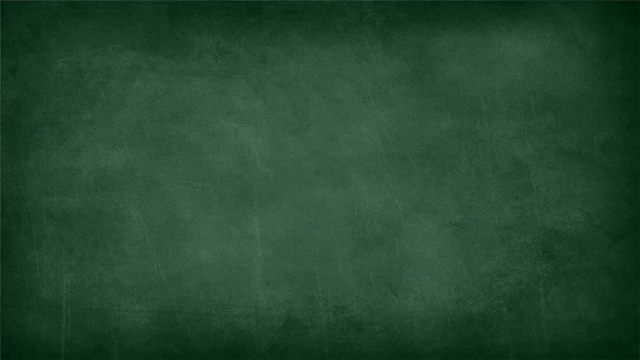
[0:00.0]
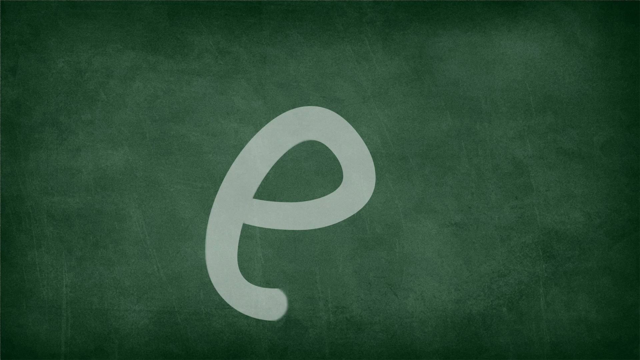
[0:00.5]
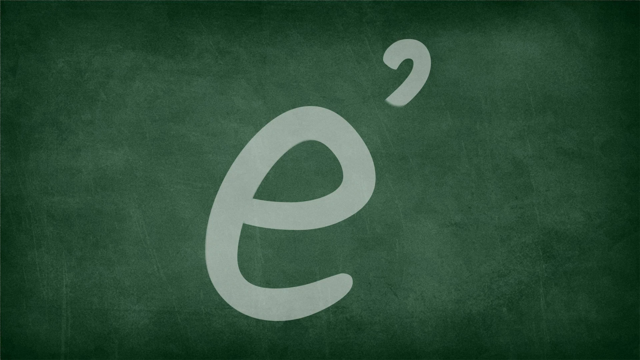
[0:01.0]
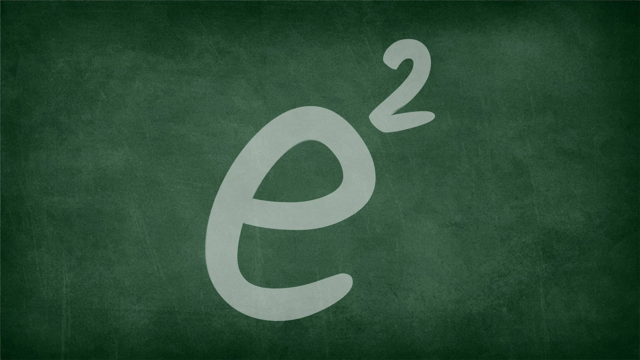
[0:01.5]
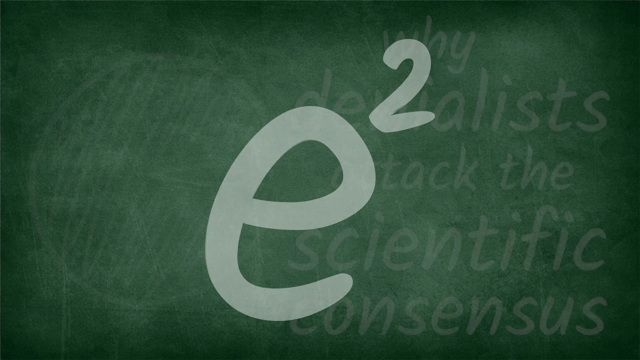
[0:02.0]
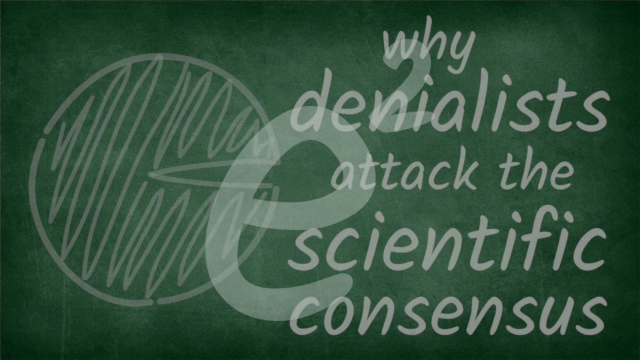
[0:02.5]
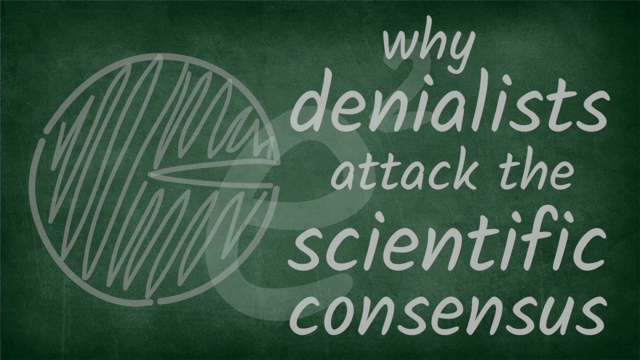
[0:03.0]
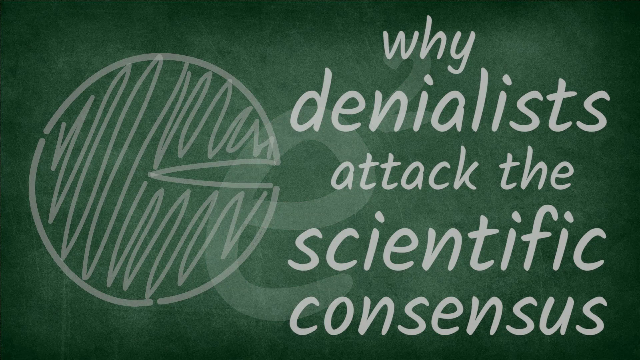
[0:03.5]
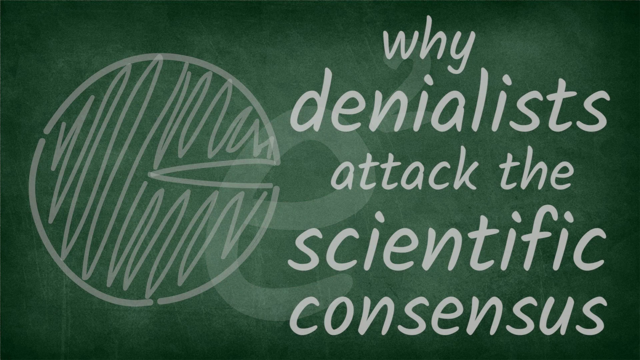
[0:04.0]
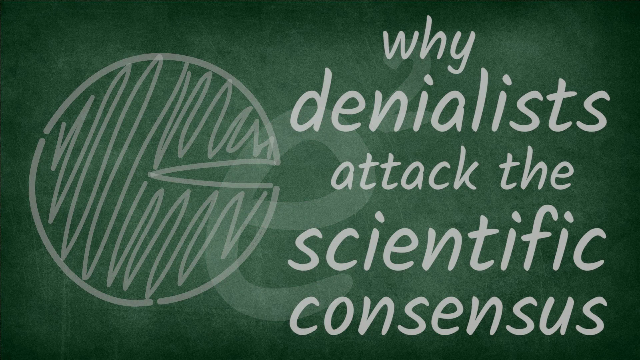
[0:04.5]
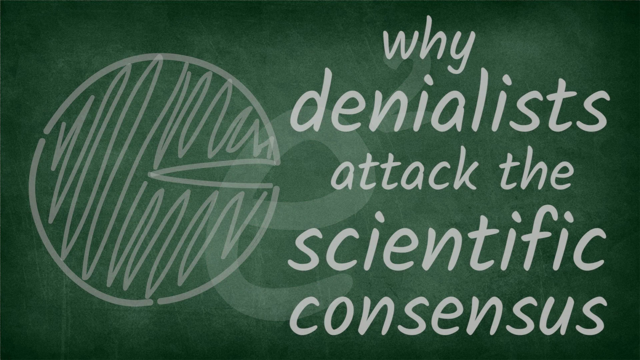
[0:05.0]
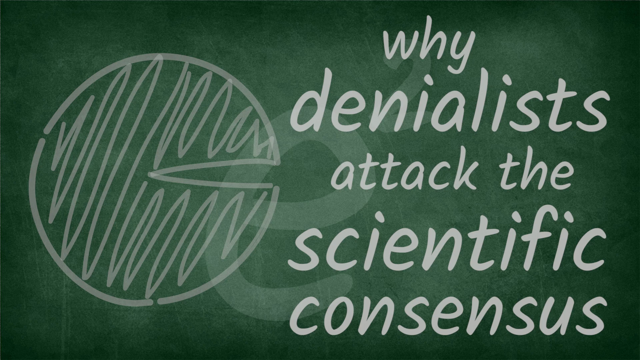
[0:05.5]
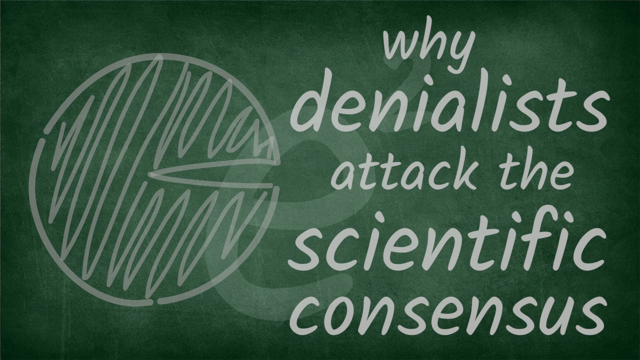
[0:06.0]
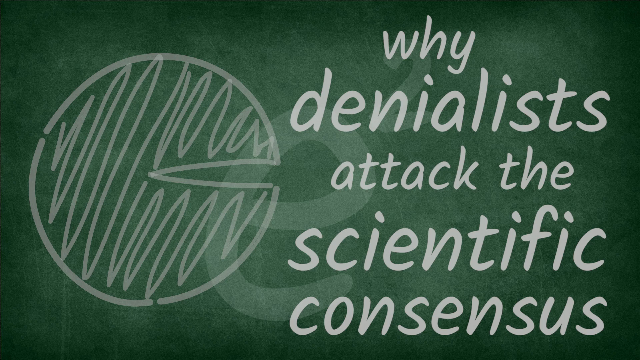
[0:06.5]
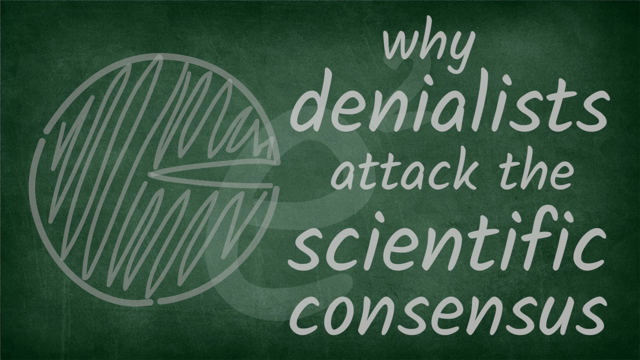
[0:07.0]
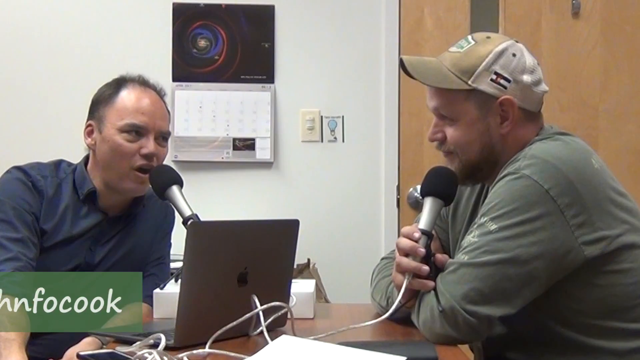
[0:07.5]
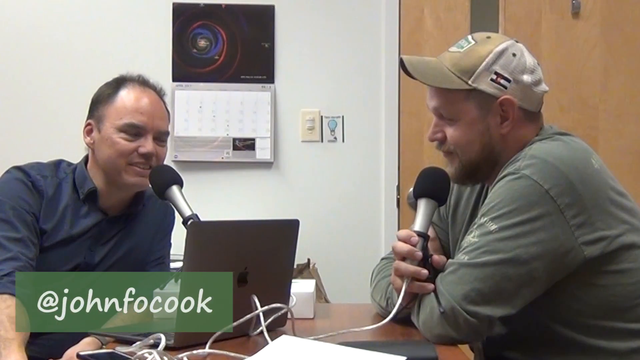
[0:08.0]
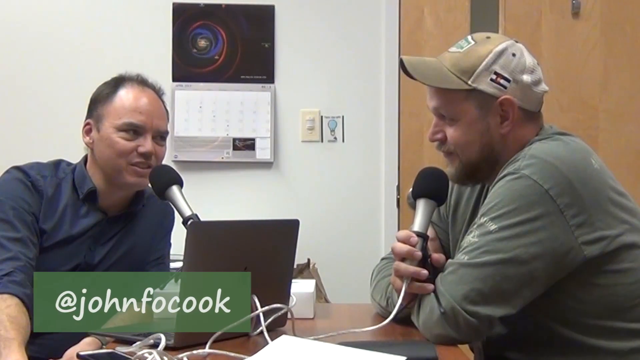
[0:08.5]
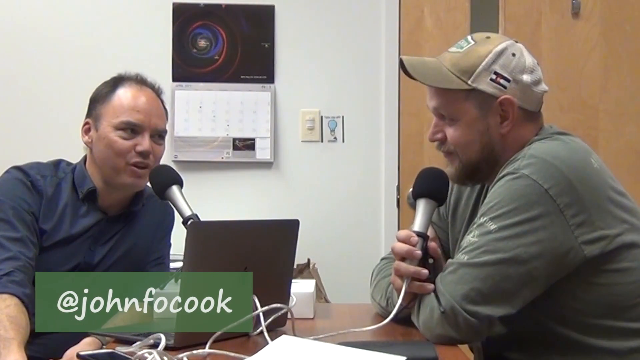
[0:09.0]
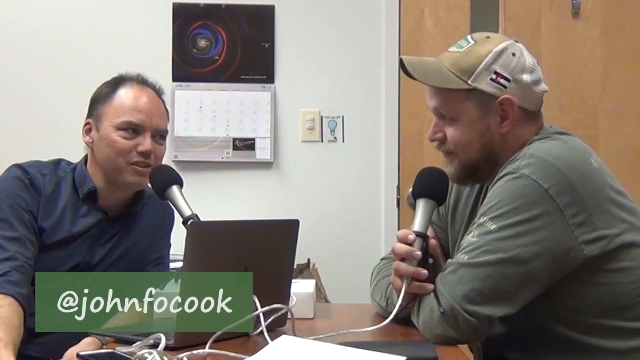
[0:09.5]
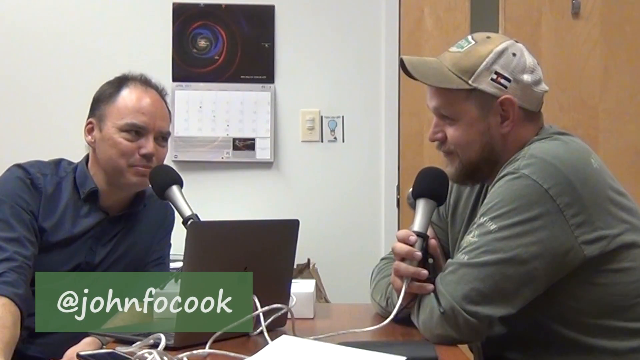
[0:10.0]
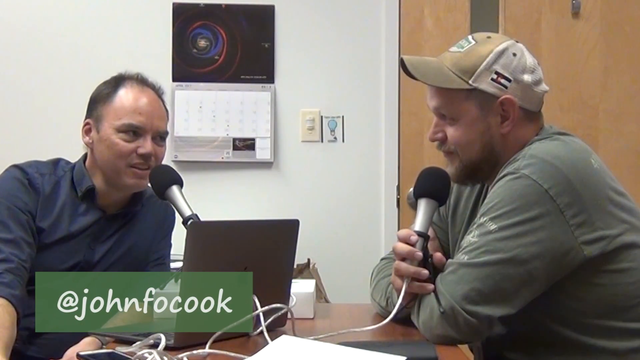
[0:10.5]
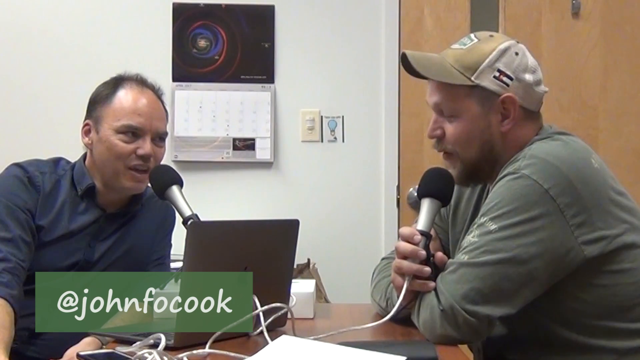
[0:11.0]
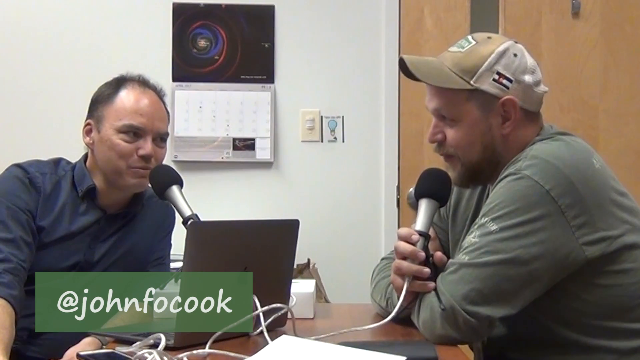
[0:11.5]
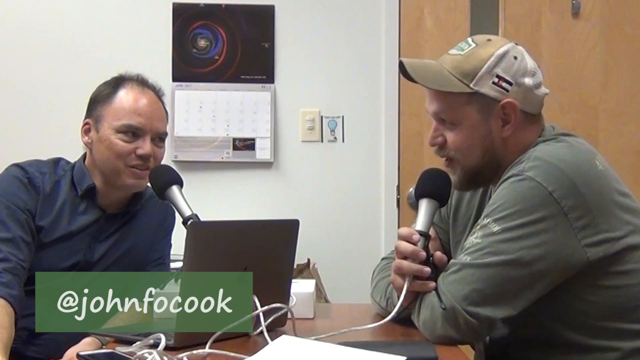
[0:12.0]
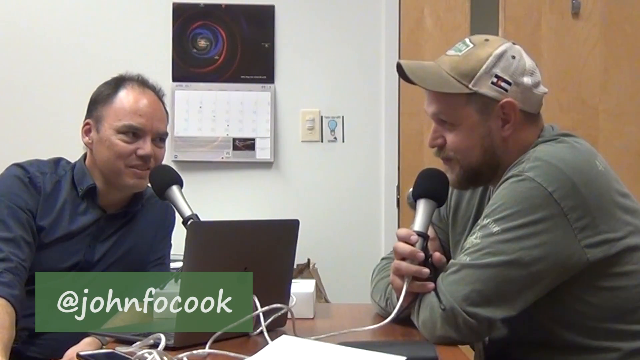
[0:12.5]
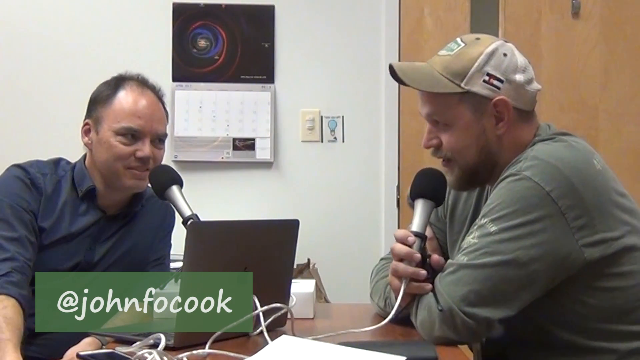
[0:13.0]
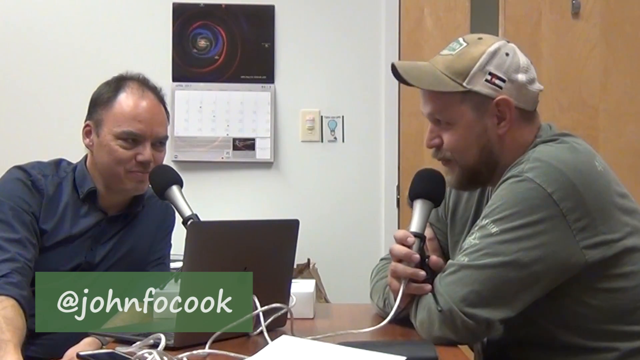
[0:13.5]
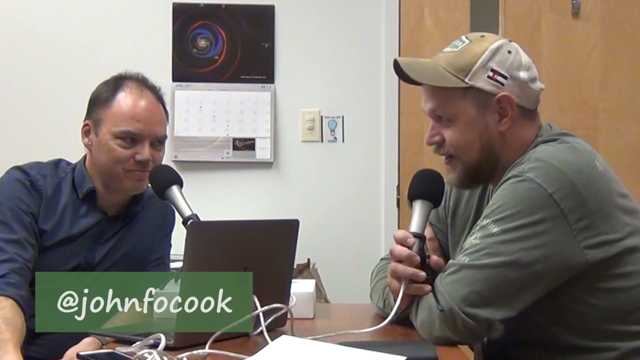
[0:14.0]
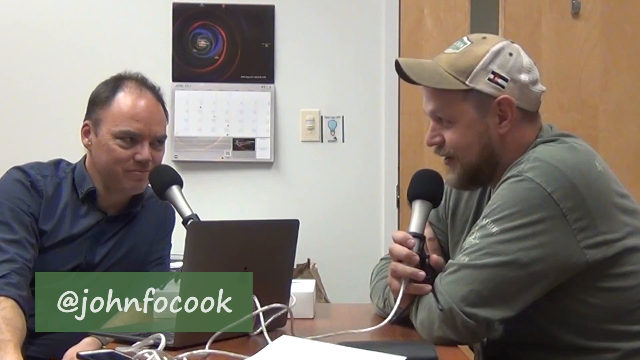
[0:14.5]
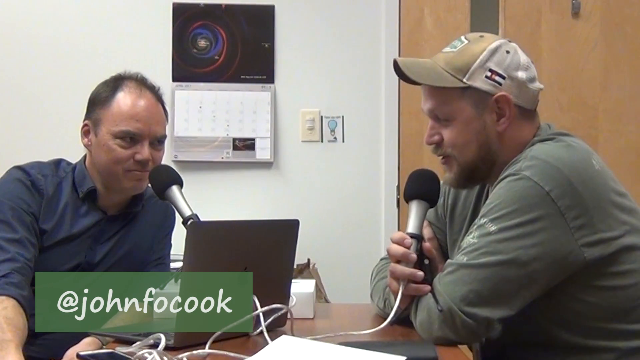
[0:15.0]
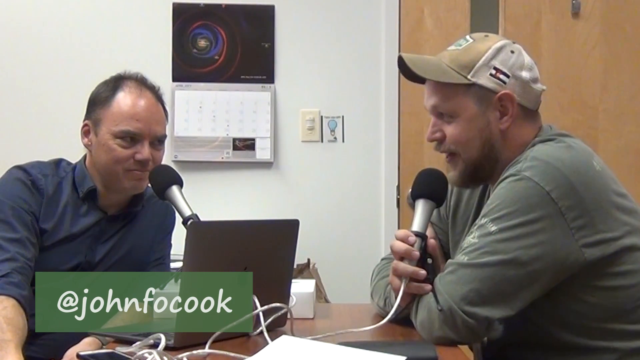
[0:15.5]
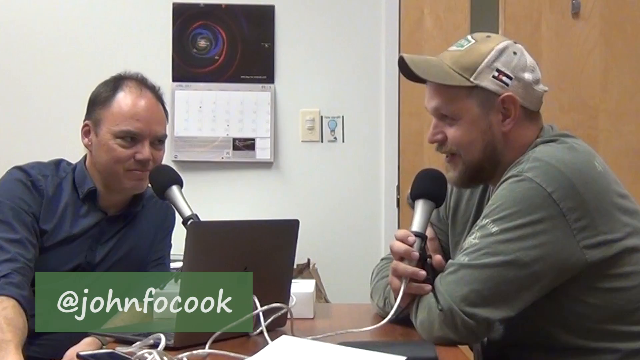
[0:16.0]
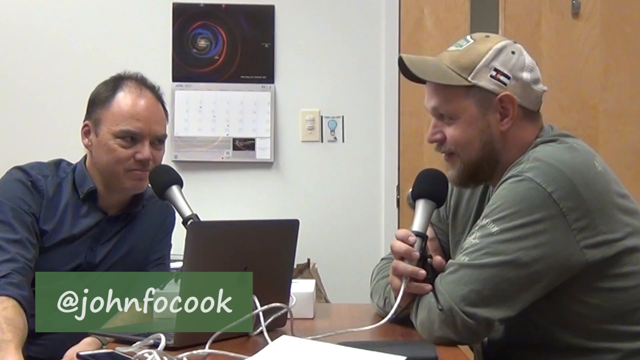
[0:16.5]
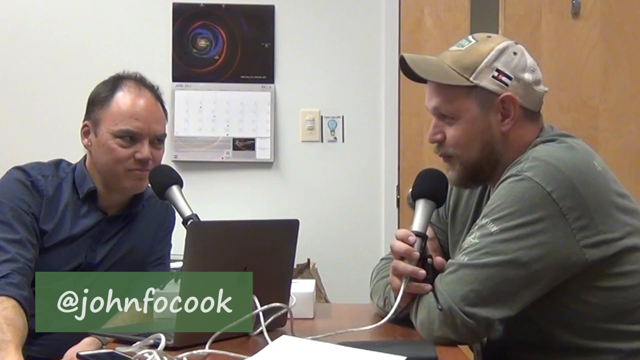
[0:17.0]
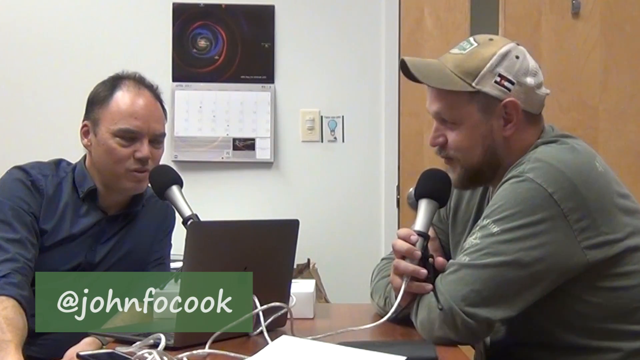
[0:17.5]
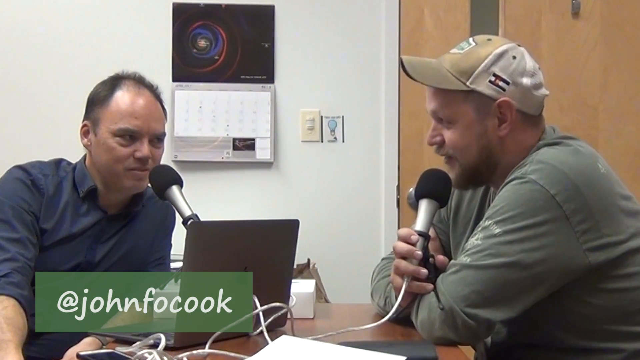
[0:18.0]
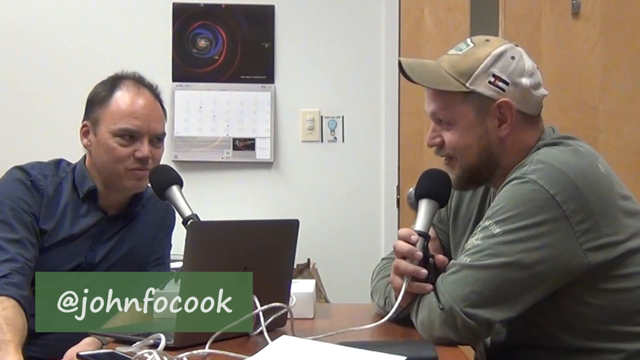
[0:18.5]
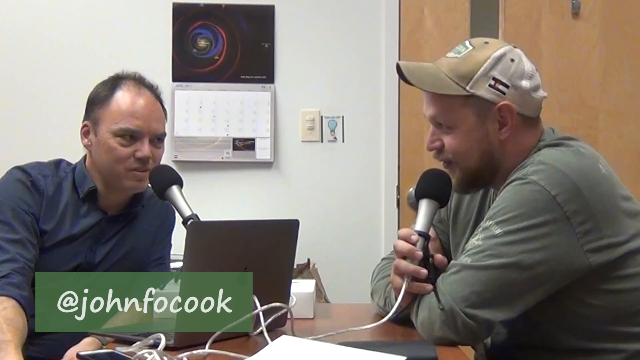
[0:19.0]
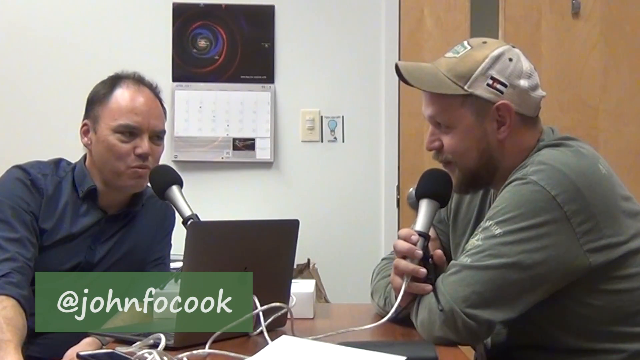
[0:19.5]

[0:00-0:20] Against a dark green background, "E squared" appears in a lighter gray color as if someone is drawing it. On the same background, the text "why denialists attack the scientific consensus" appears, with a green object that looks like Pac-Man on the left. Two men then face each other, each with a microphone in front of him. The man on the viewer's left seems to be about 45, with receding dark hair, dark eyes, and a blue button-down shirt; he has a microphone and an open laptop in front of him. The man on the viewer's right is a little younger, in his late 20s or early 30s, wearing a brown and white baseball cap and a light green long-sleeved shirt; he holds his microphone in his right hand and has brown hair, a mustache, and a beard. On the bottom left there is something green with the text "@JohnFocook".